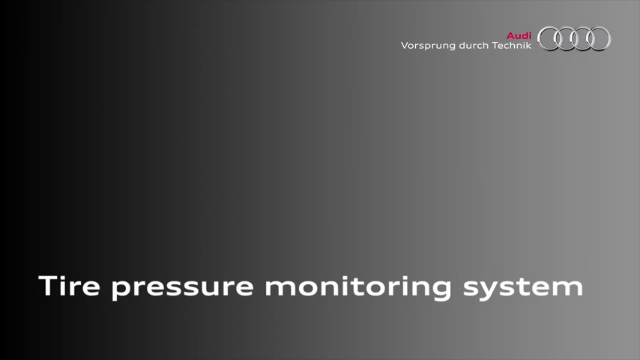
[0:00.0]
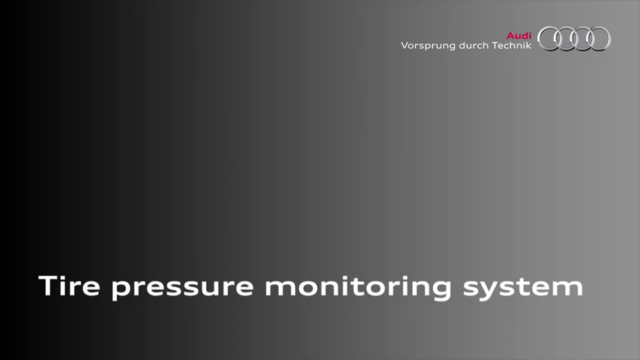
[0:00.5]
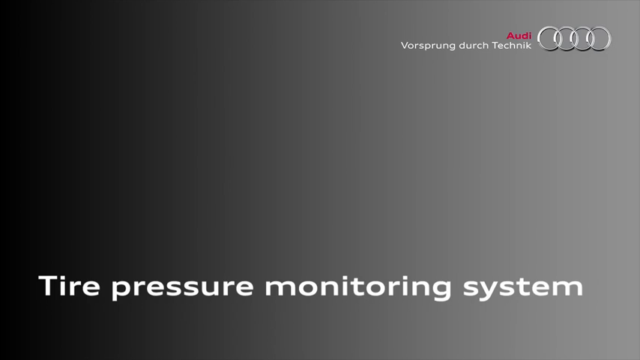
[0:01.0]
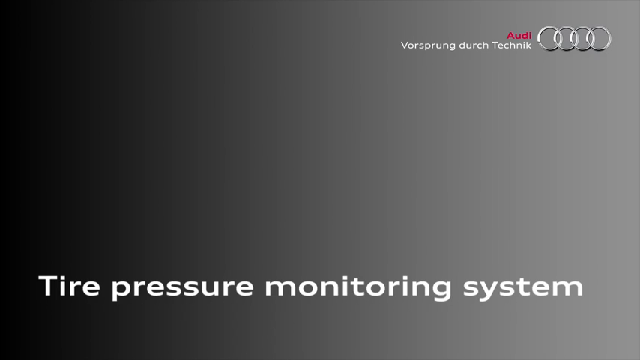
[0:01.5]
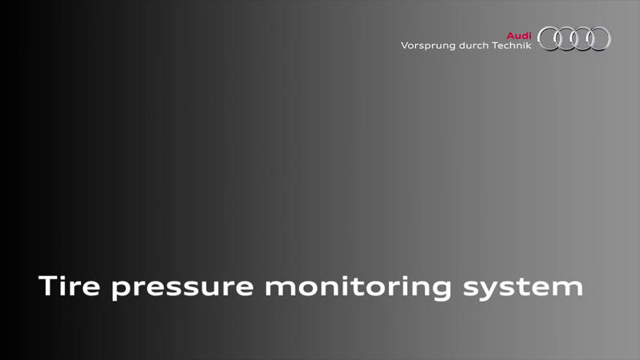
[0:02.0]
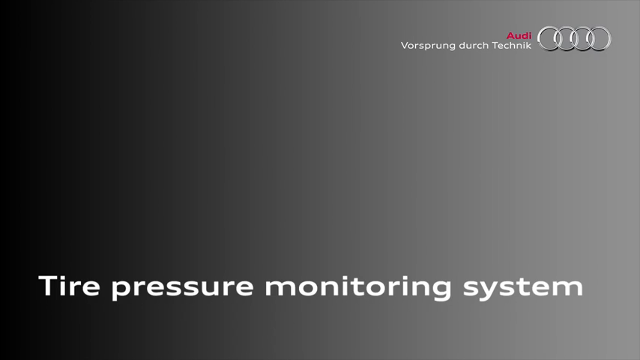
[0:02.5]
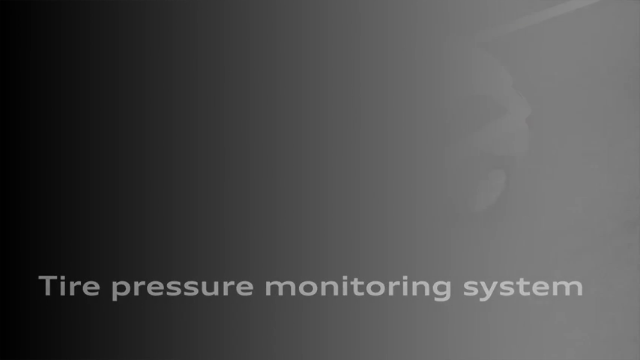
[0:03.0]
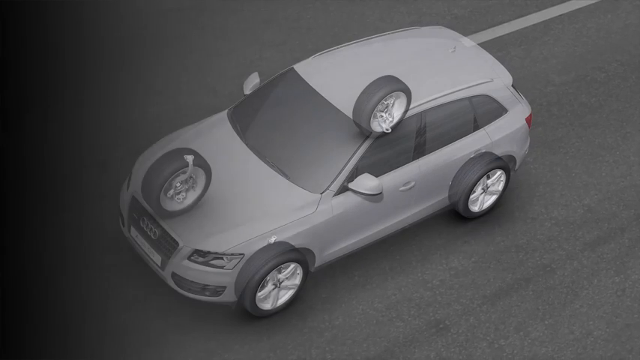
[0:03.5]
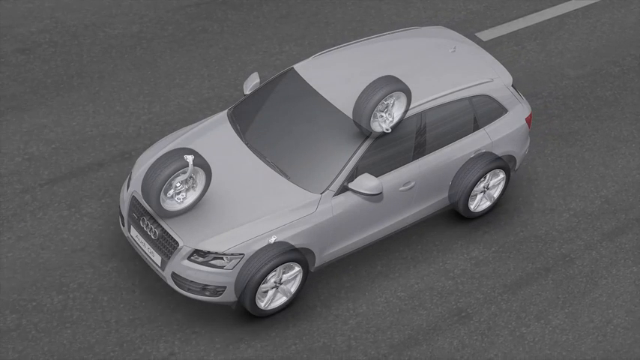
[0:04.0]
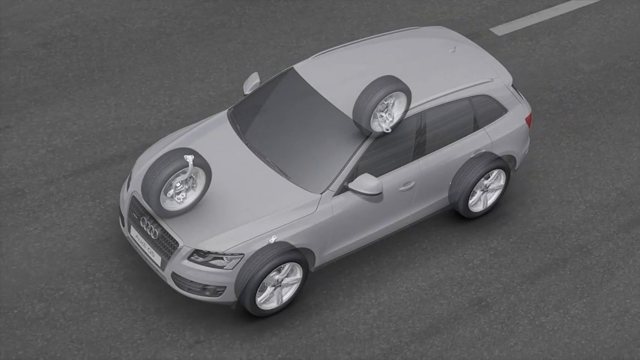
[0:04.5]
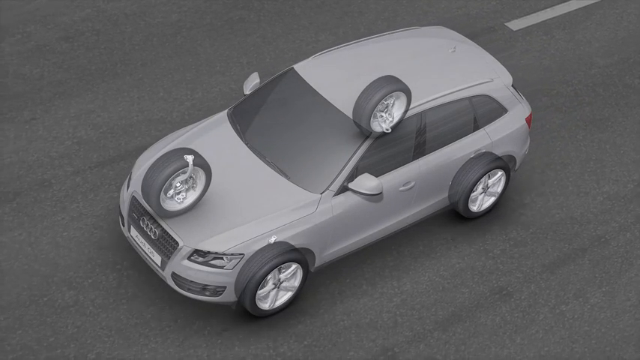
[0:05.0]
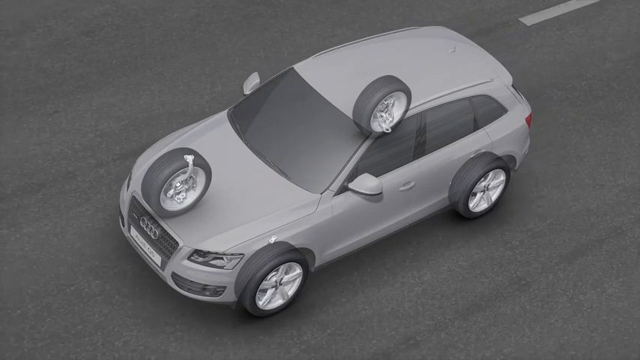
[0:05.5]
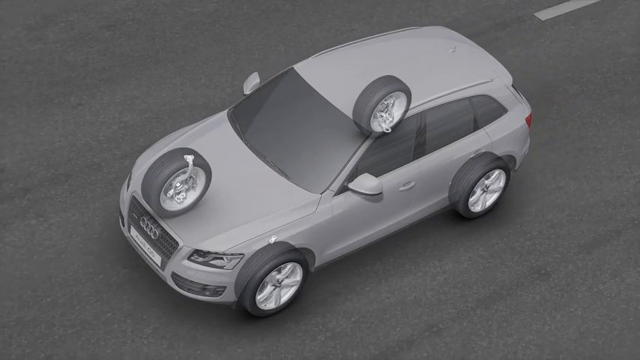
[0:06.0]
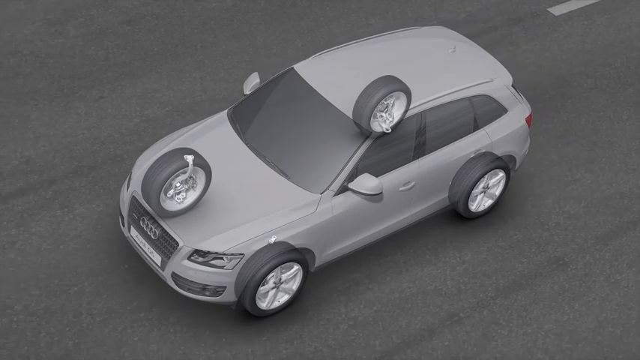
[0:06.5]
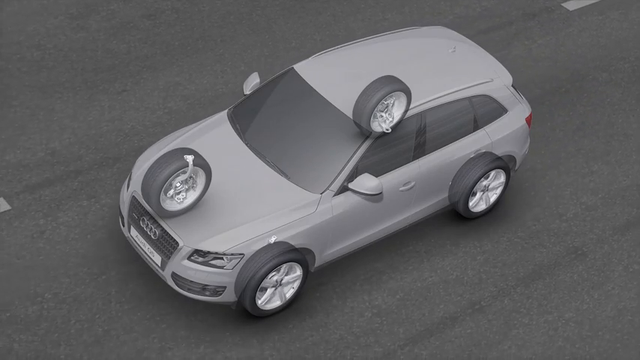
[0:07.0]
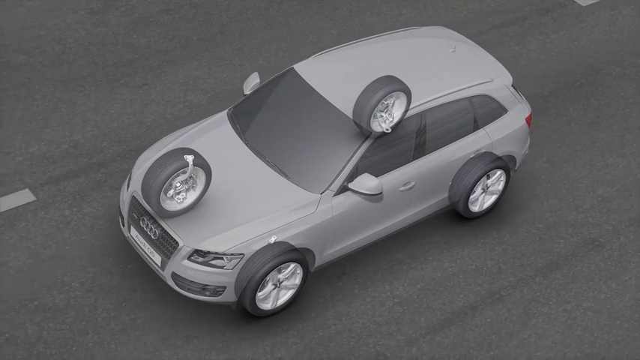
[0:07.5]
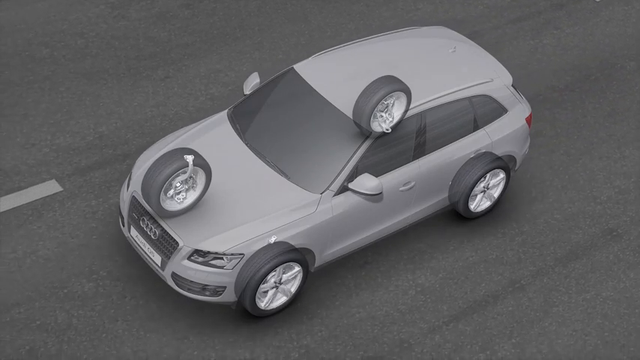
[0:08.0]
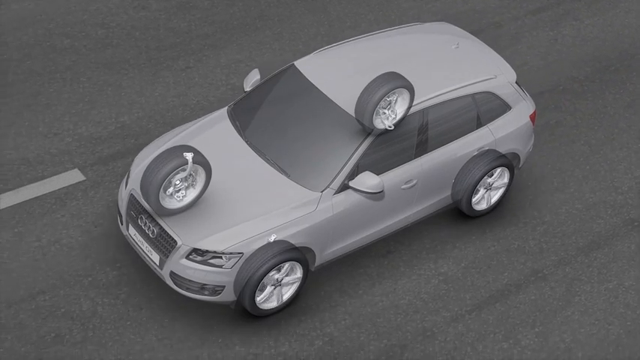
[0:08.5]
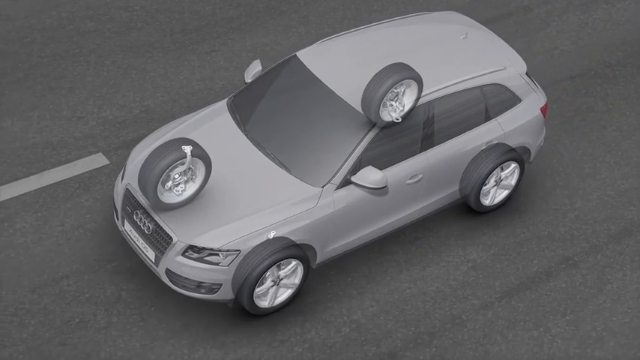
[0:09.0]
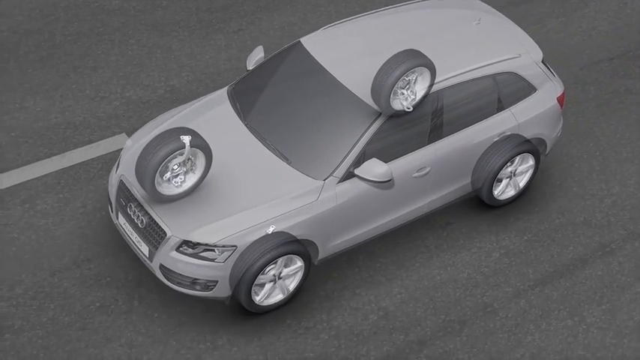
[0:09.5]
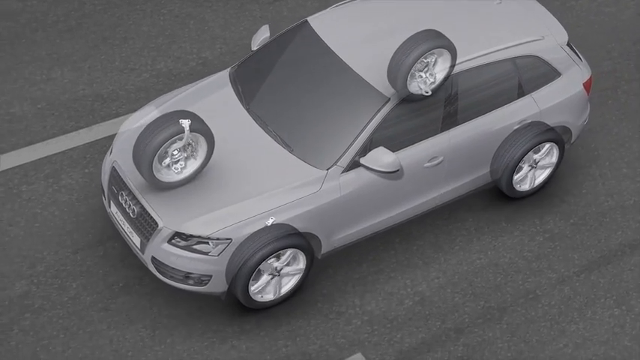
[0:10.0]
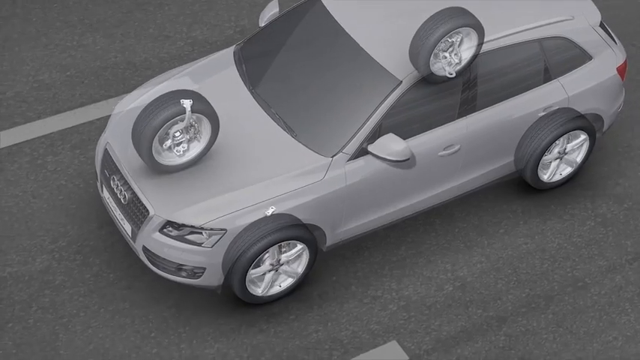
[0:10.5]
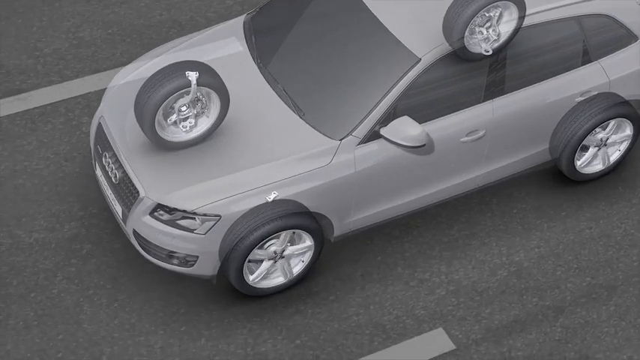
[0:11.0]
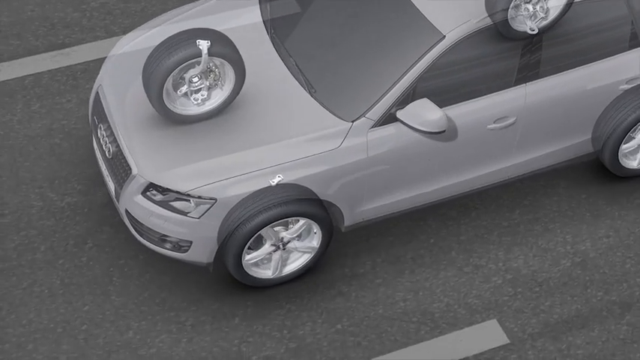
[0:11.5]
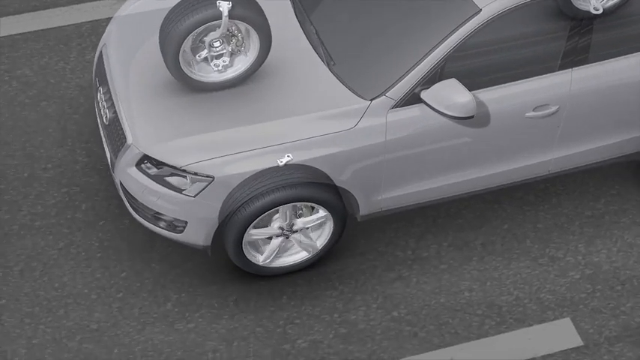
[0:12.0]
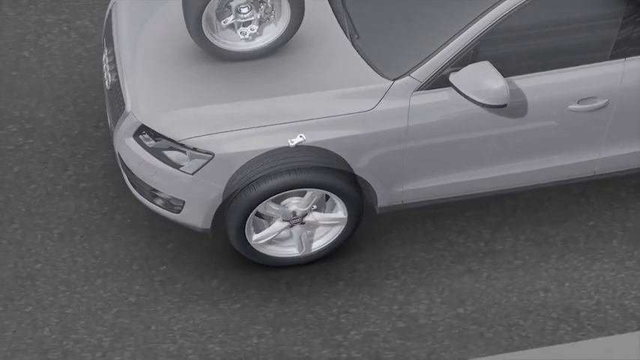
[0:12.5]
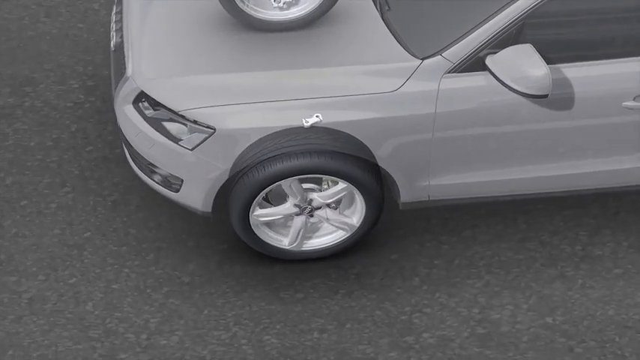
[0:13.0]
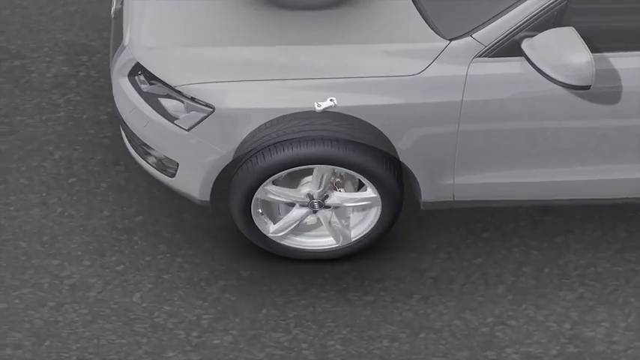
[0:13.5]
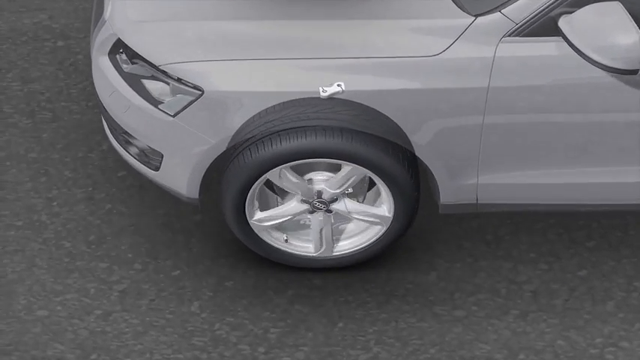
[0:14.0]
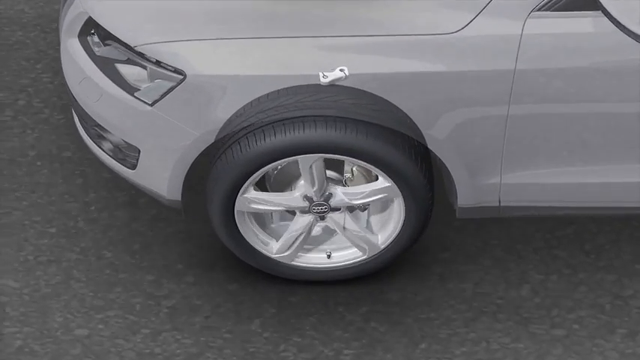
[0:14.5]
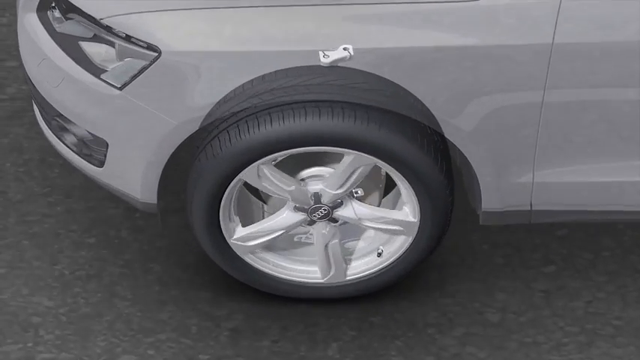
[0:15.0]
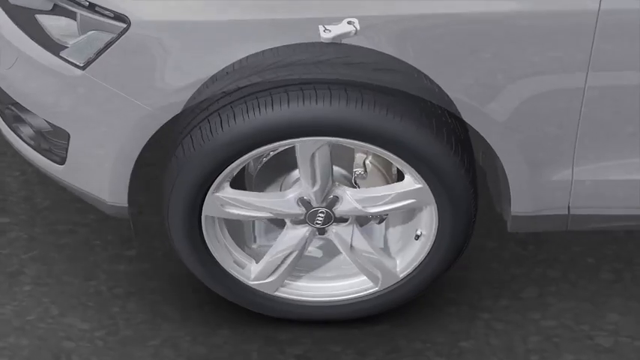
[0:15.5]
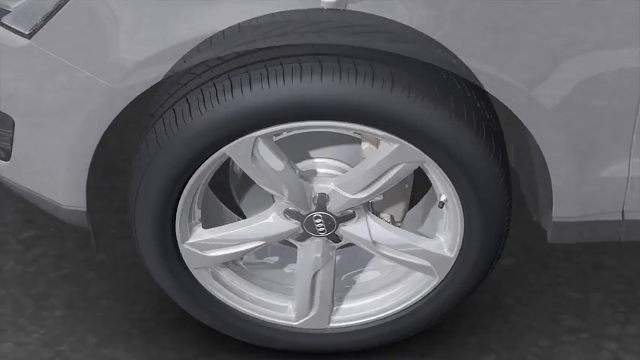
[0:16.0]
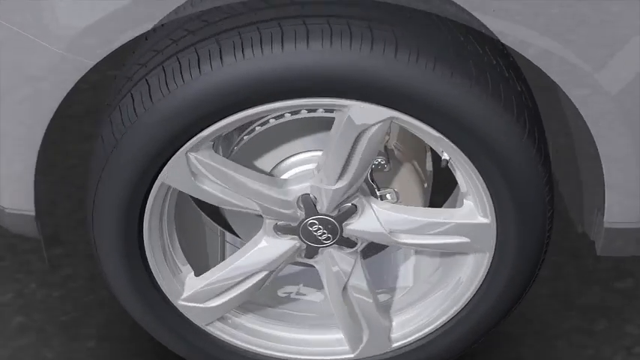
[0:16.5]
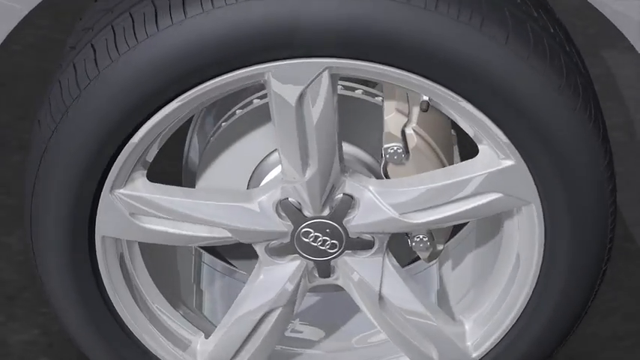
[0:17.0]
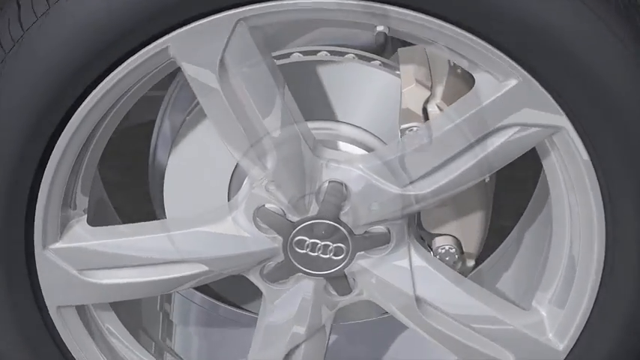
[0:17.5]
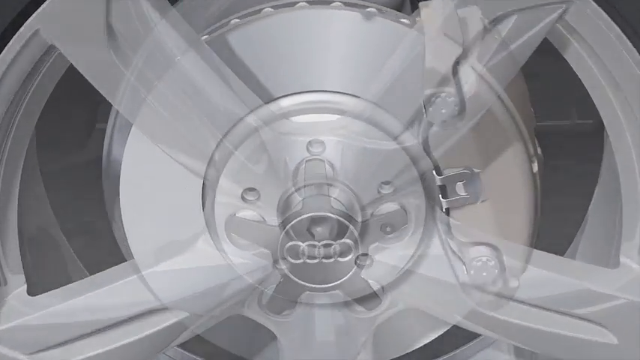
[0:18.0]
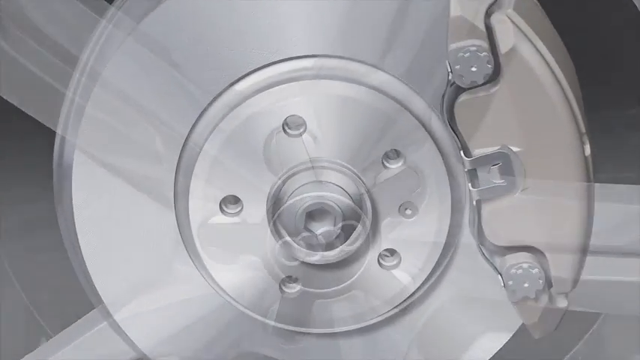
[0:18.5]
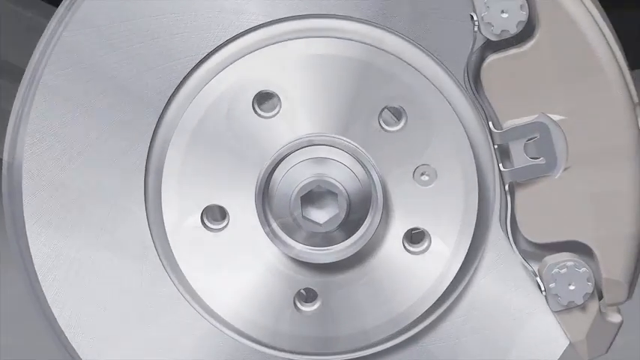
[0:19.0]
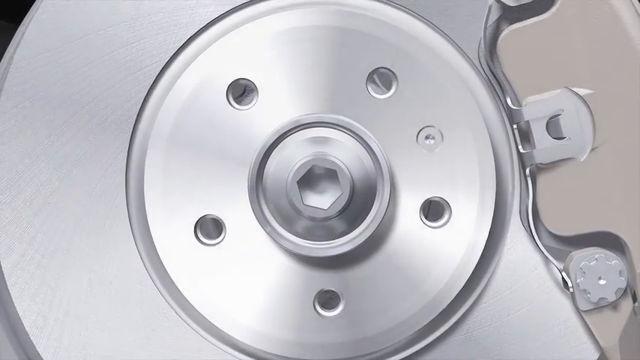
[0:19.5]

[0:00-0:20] This is an ad from the car brand Audi. In the top right corner is the Audi symbol, four rings connected side by side, along with the word "Audi" in red. A caption at the bottom introduces the ad: "Tire Pressure Monitoring System." The background is gray, fading to black on the left side. The cover then disappears and an SUV appears, a computer-generated 3D model. The SUV is very translucent and see-through, and its four tires are visible. The view zooms in on the driver's front tire, which rotates and spins as the car moves, followed by a close-up view of the inside of the tire.